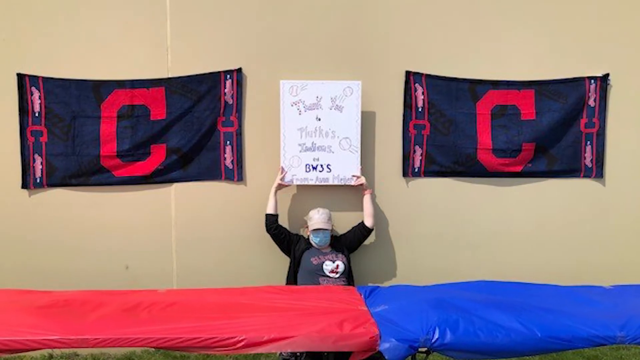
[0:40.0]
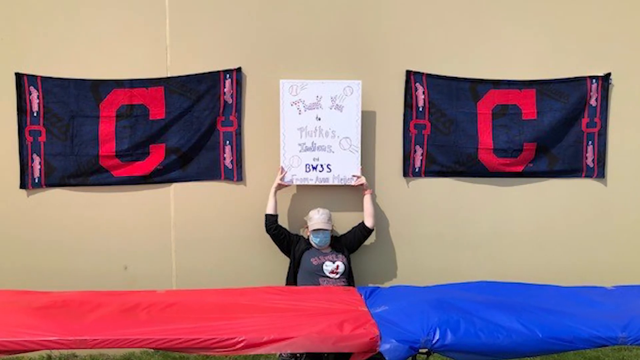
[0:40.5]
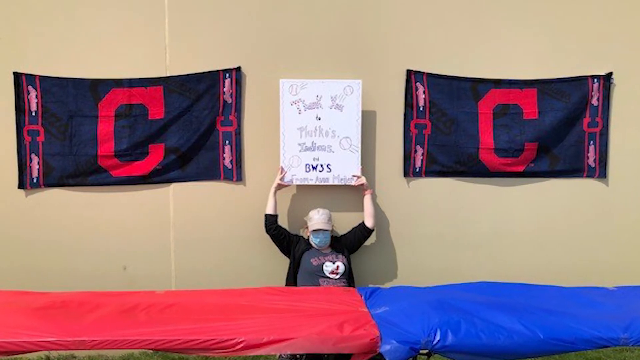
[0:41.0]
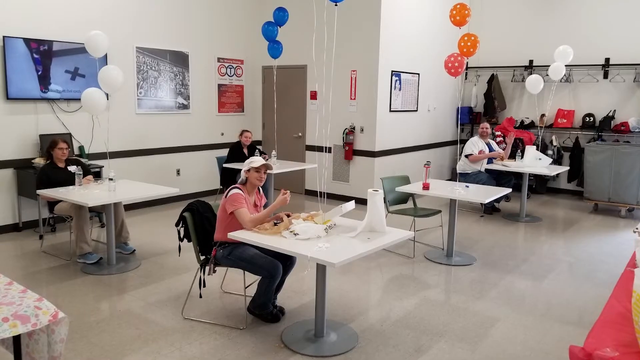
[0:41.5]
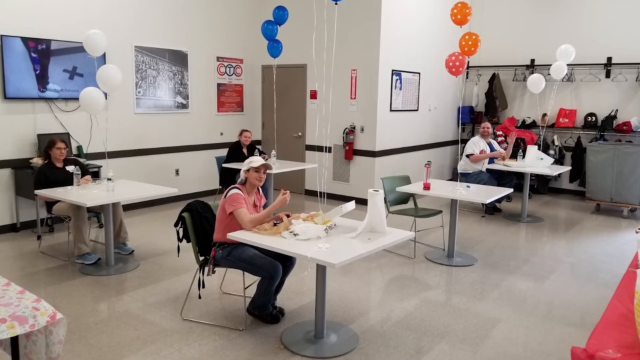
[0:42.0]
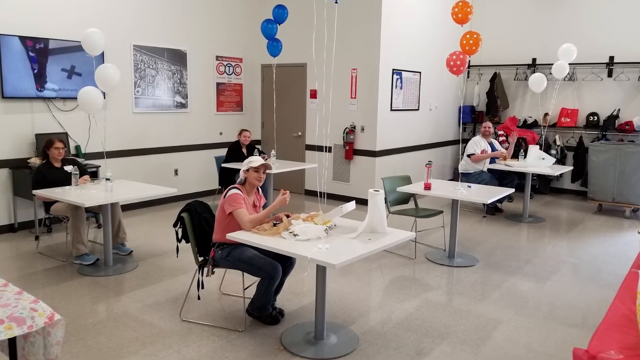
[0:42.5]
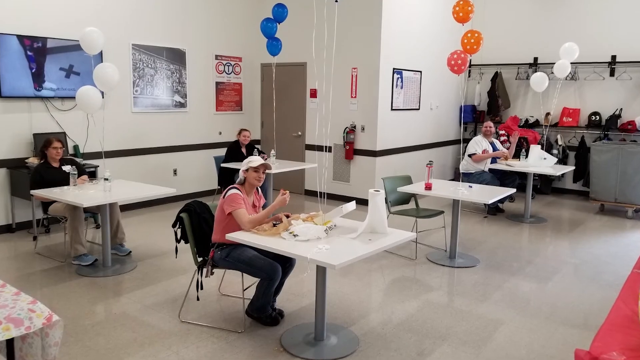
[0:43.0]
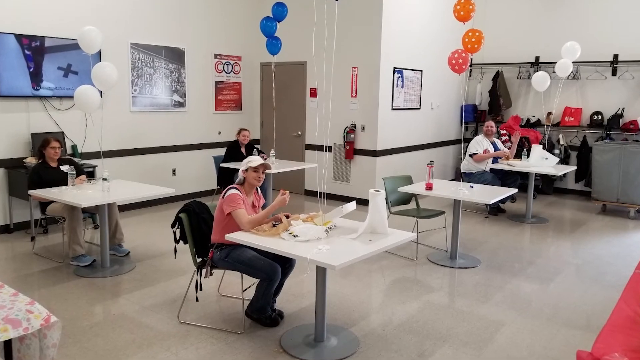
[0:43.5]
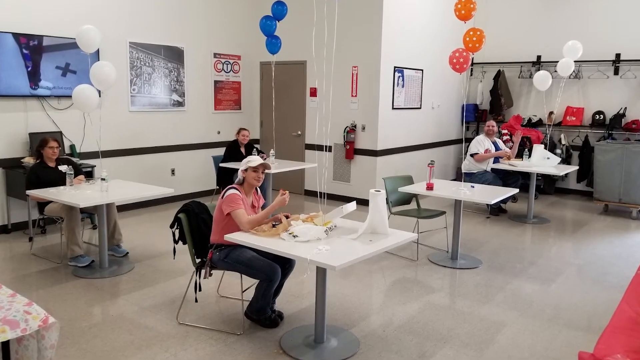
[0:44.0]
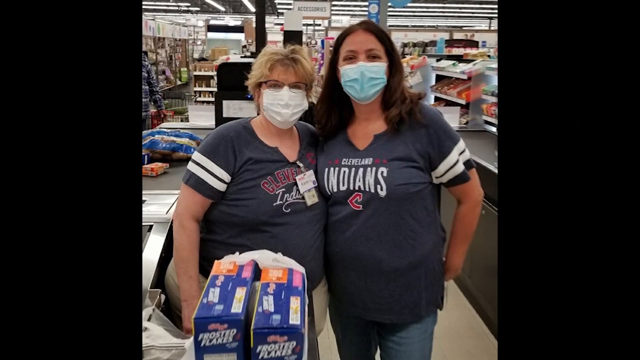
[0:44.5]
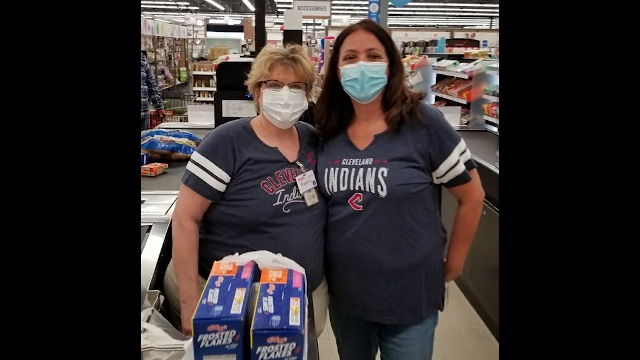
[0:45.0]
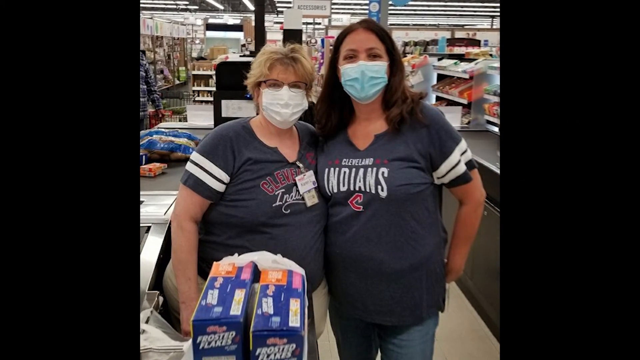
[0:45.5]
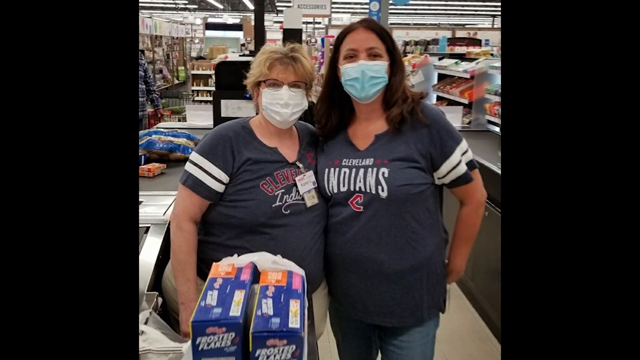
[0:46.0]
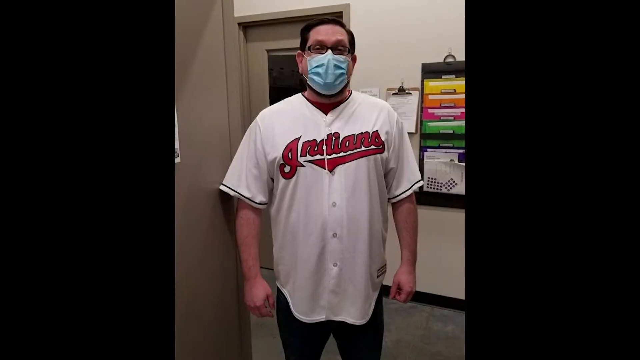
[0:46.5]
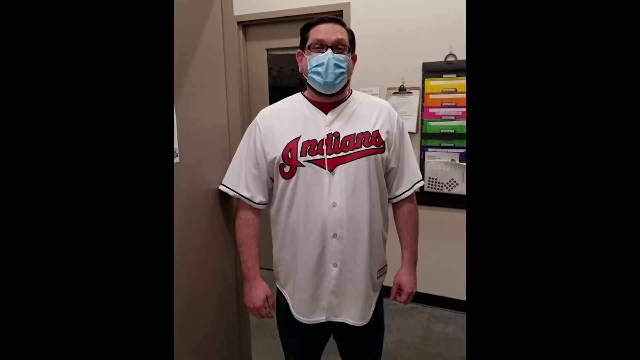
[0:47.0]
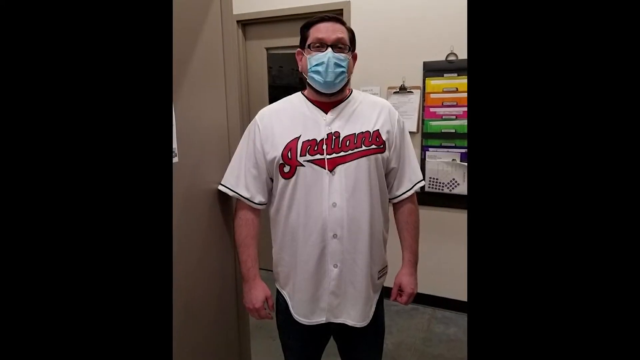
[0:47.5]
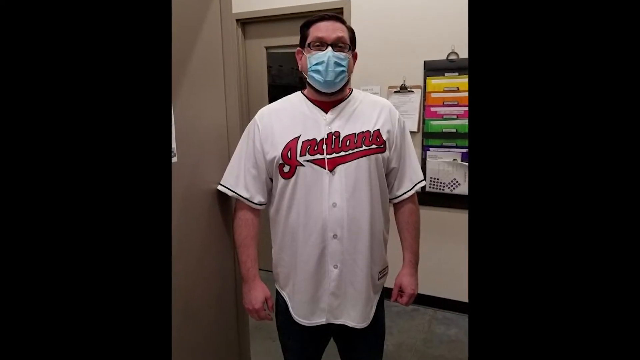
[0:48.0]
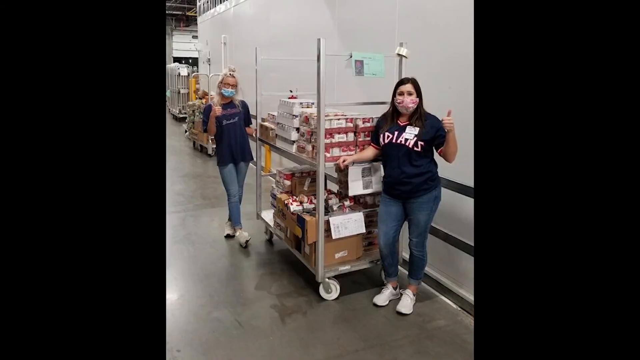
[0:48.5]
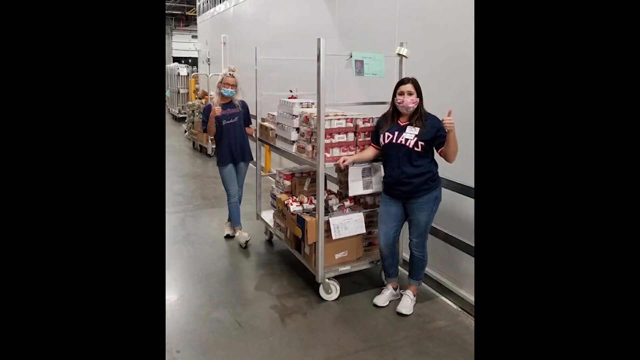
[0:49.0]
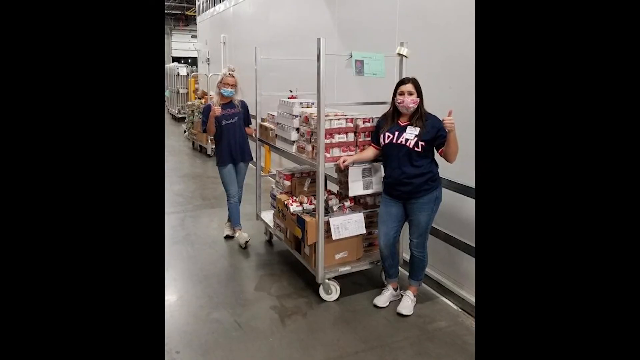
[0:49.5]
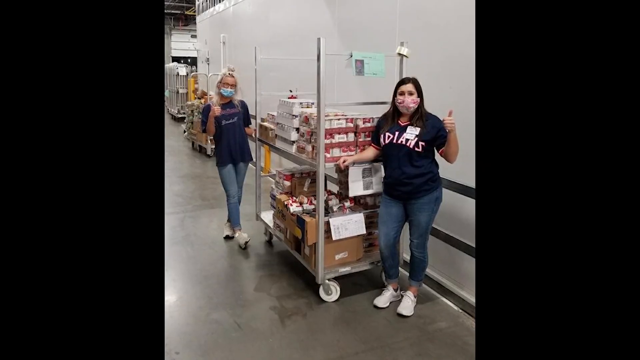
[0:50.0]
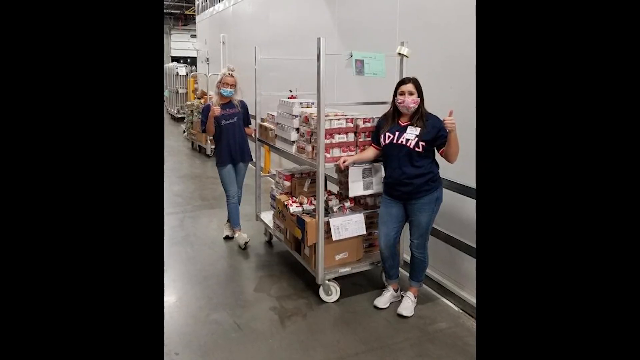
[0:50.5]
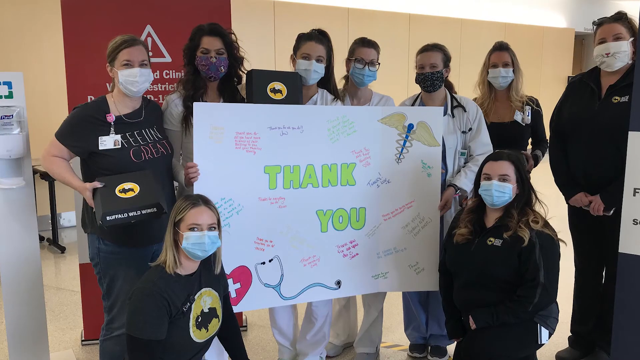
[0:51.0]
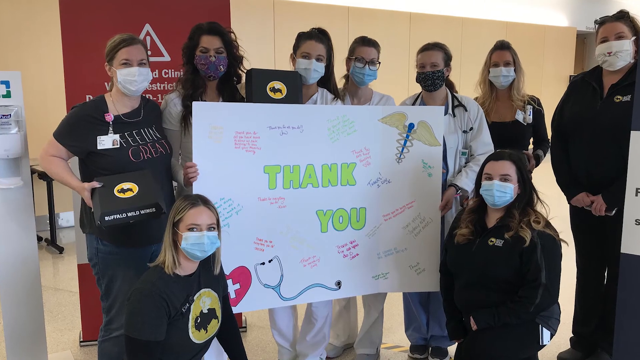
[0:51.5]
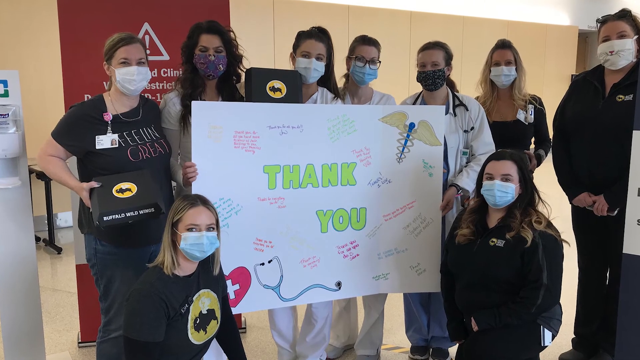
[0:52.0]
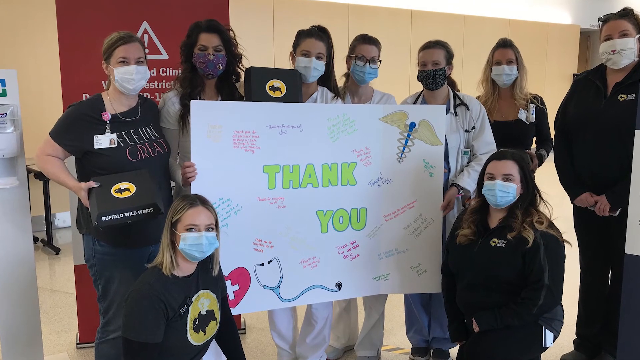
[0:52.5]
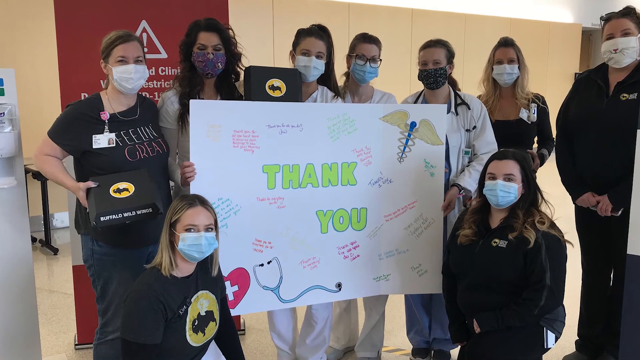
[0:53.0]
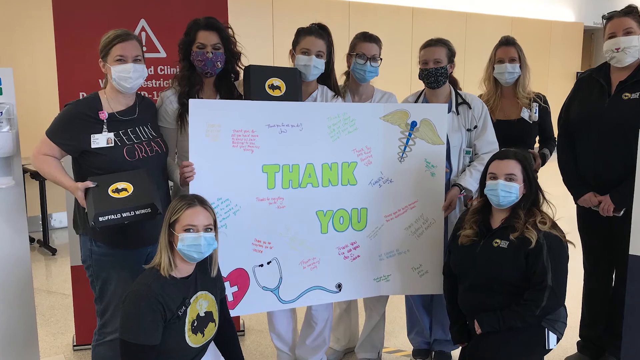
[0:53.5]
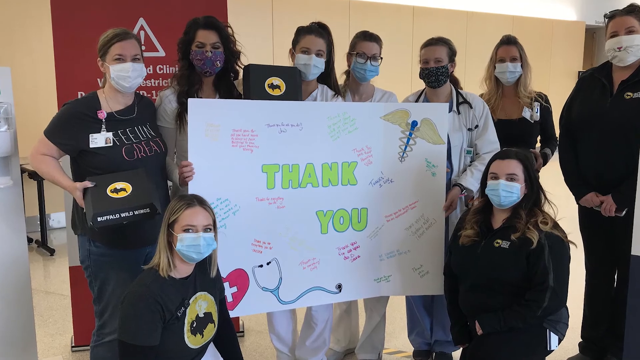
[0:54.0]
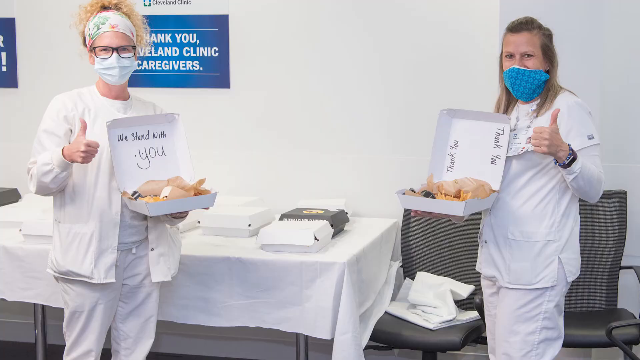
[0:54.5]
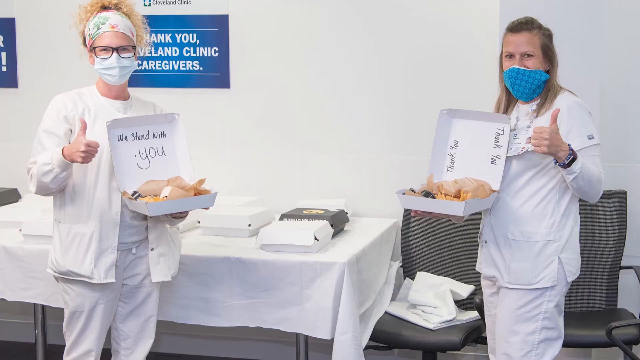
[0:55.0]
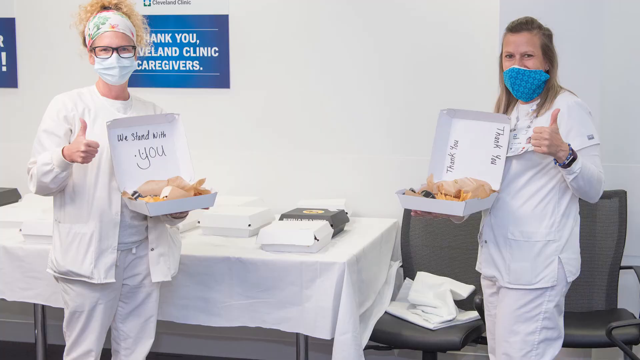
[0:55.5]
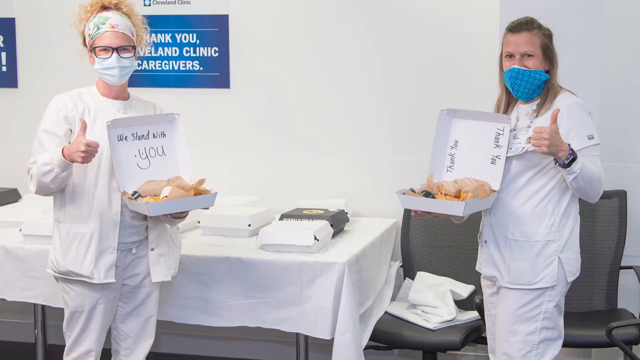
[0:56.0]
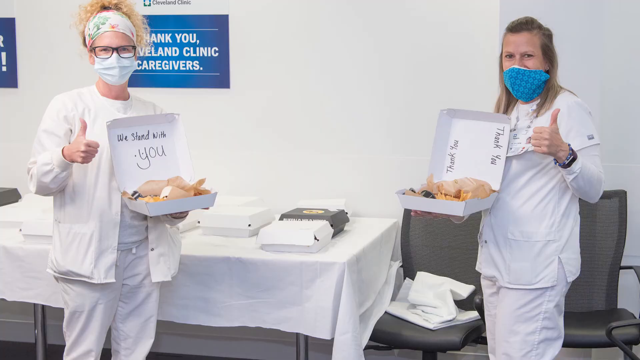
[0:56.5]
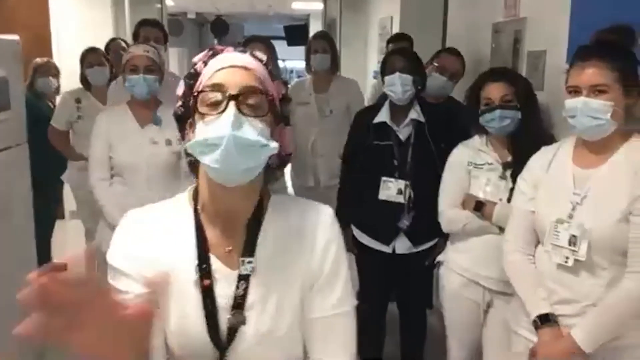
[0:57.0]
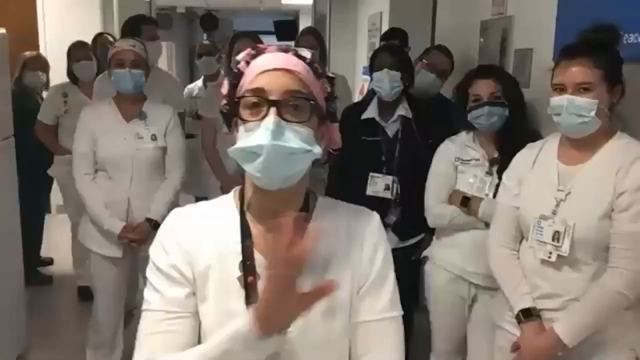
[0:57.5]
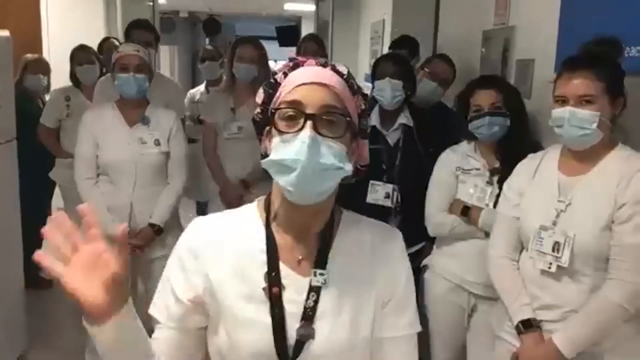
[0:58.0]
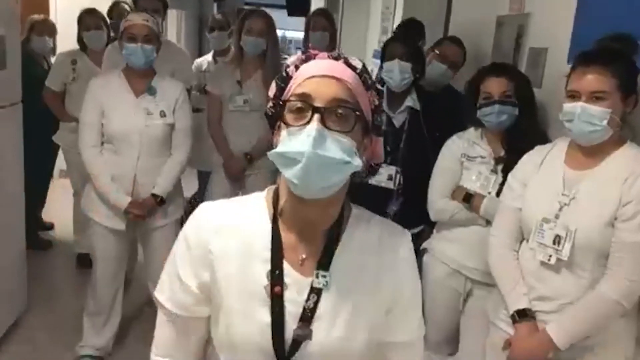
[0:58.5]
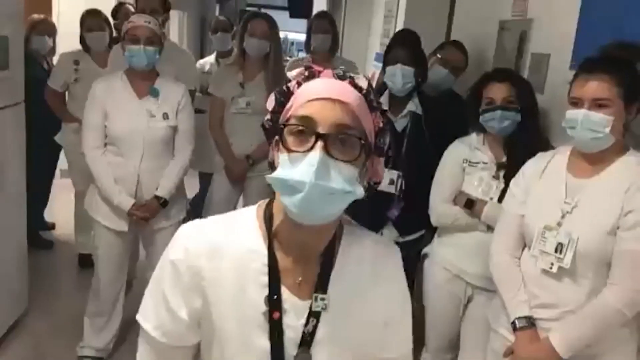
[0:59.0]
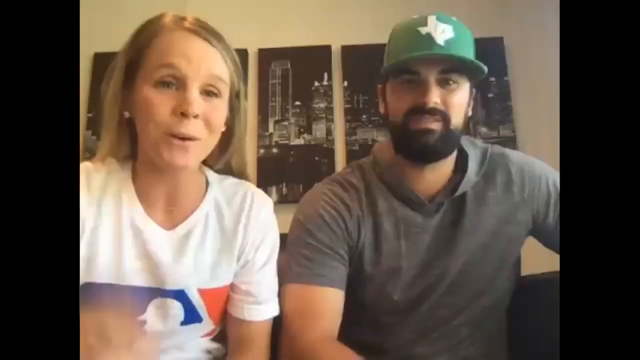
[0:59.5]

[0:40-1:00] A person stands in front of a wall with two blue flags, one to their left and one to their right. The person, in the middle between the flags, wears a hat, a t-shirt, what appears to be a black sweater, and a face mask, and holds up a sign that says "thank you". The video cuts to people sitting apart at desks or tables with balloons in front of them, some white, orange, and blue; they appear to be in some sort of workroom or office. Next is a picture of two people in face masks wearing shirts that say "Cleveland Indians", apparently taking the picture in a grocery store. Another photo shows a man in a face mask wearing a jersey that says "Indians" on the front, apparently in some sort of office. Another picture shows two women in shirts that say "Indians" giving a thumbs up while holding a cart with a lot of food on it. The final image shows a group of what appear to be health care workers with badges on their shirts, all wearing face coverings and holding up a sign that says "thank you".